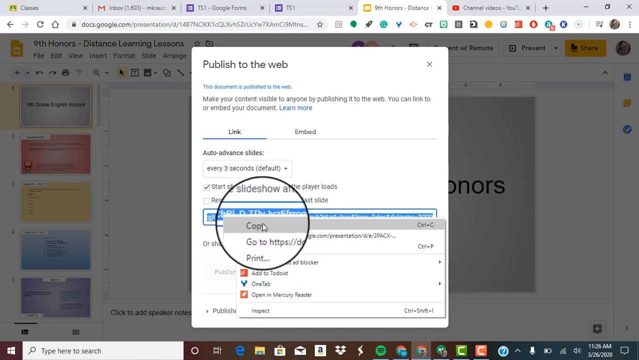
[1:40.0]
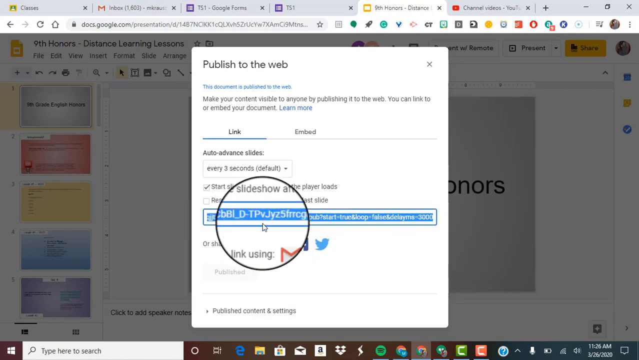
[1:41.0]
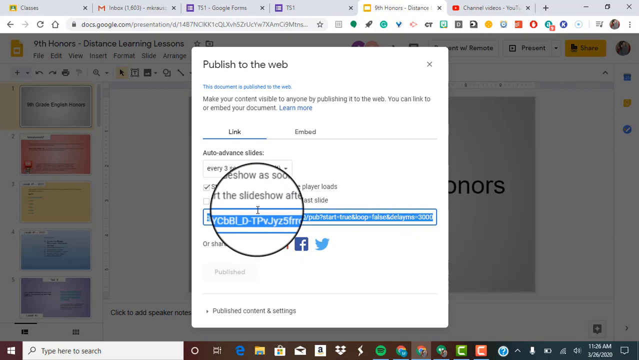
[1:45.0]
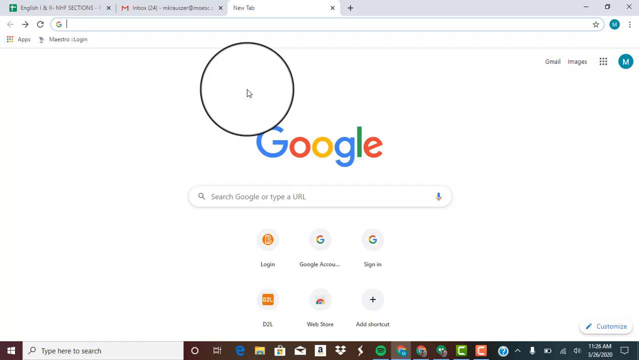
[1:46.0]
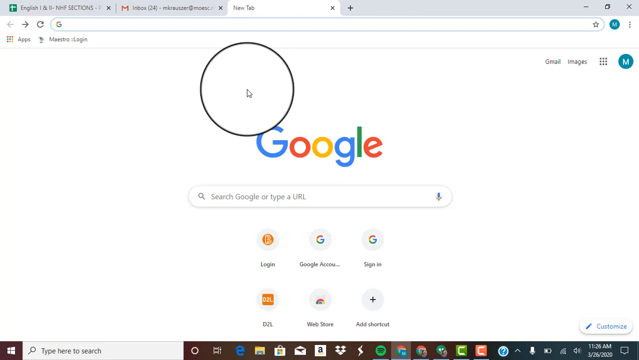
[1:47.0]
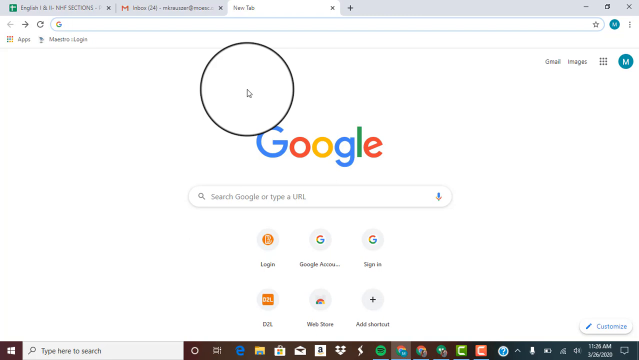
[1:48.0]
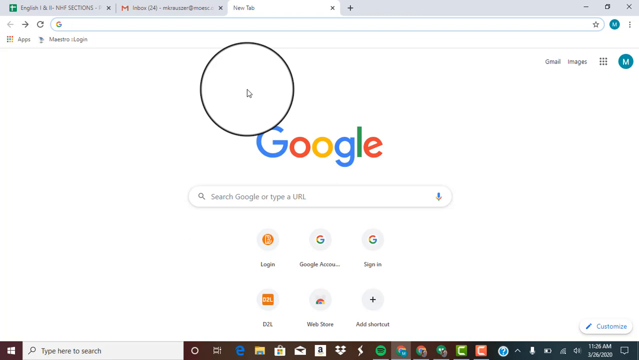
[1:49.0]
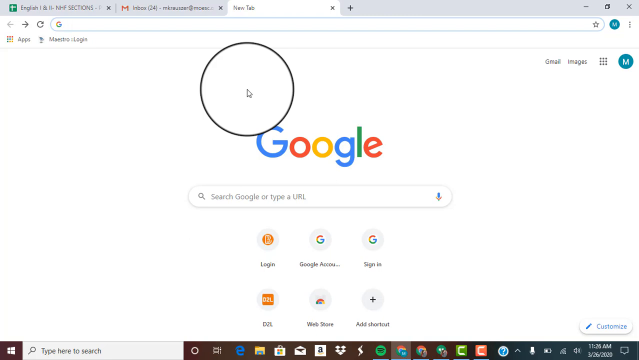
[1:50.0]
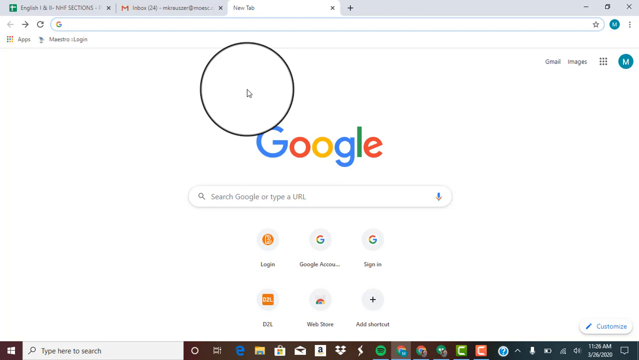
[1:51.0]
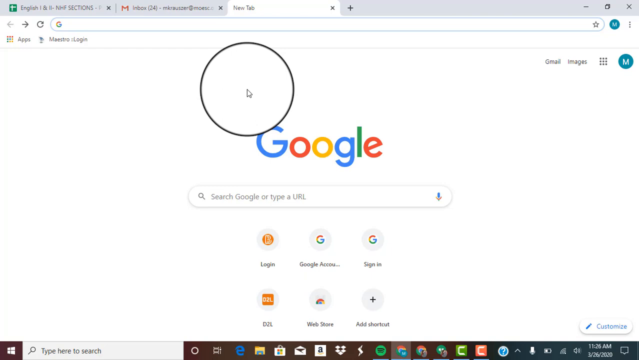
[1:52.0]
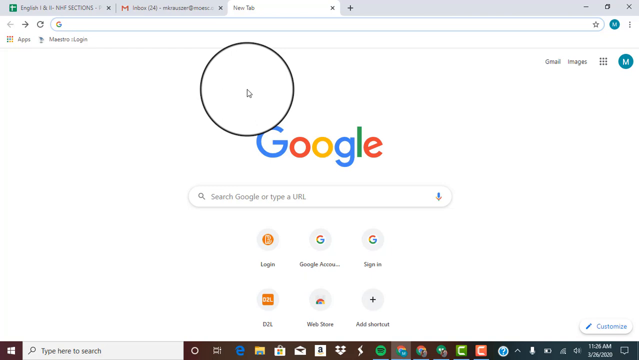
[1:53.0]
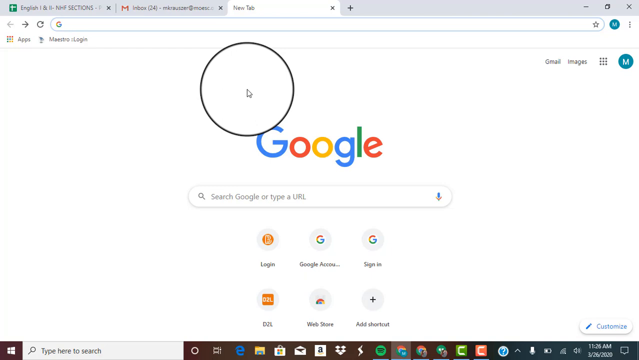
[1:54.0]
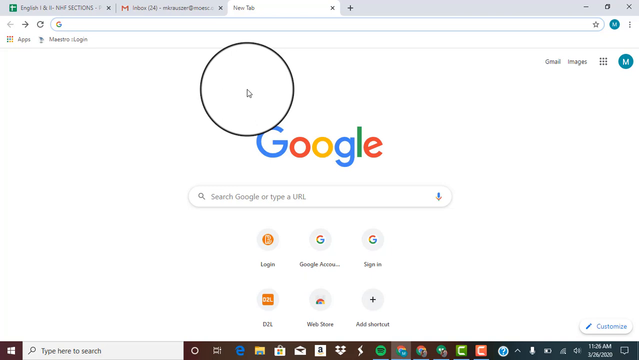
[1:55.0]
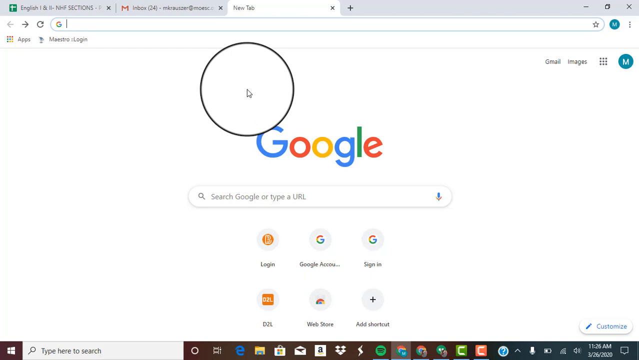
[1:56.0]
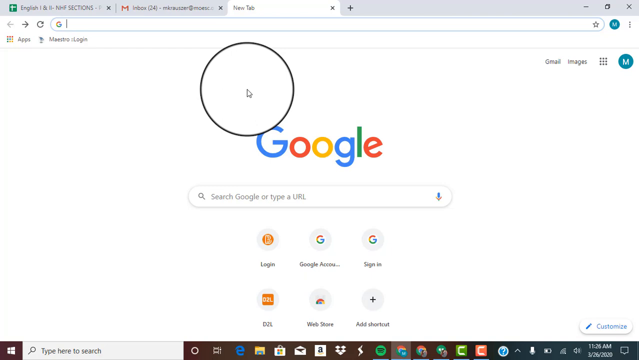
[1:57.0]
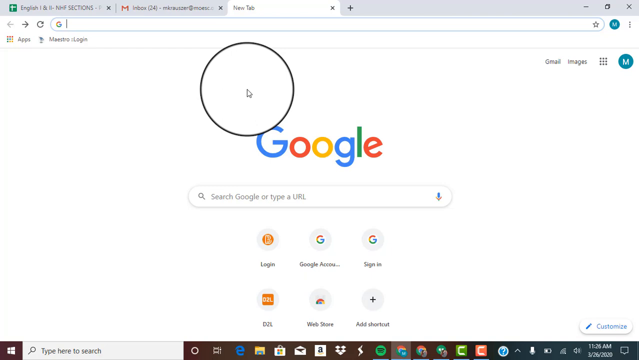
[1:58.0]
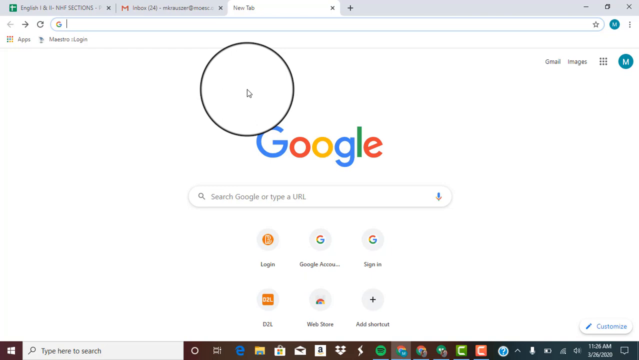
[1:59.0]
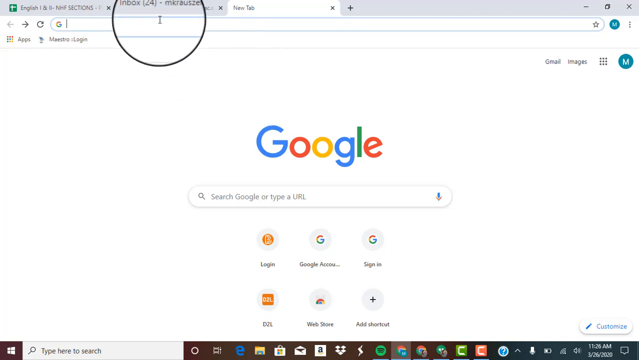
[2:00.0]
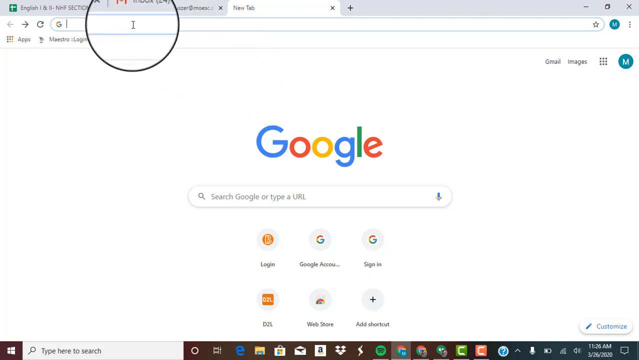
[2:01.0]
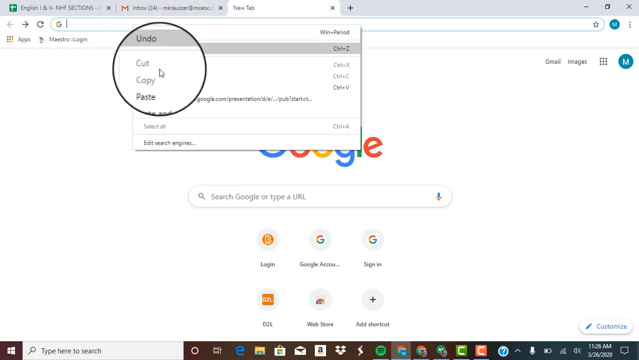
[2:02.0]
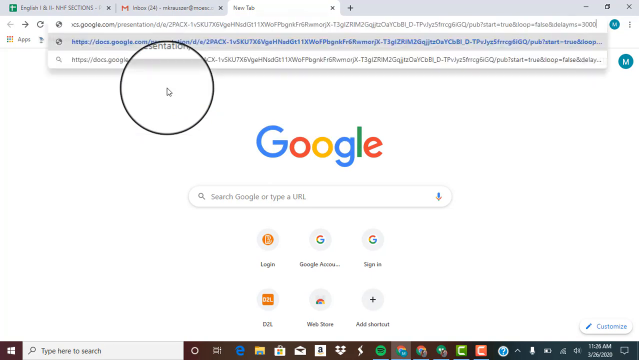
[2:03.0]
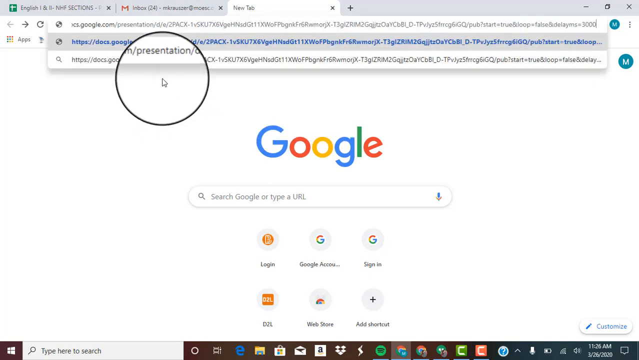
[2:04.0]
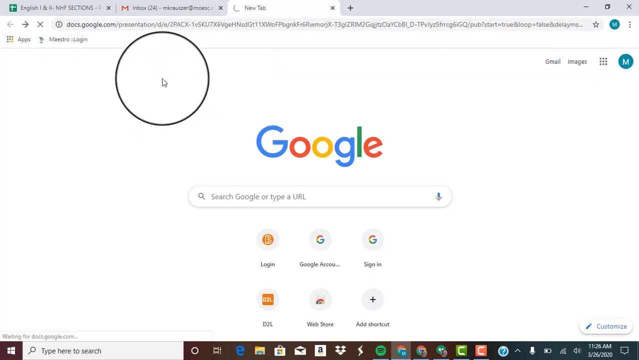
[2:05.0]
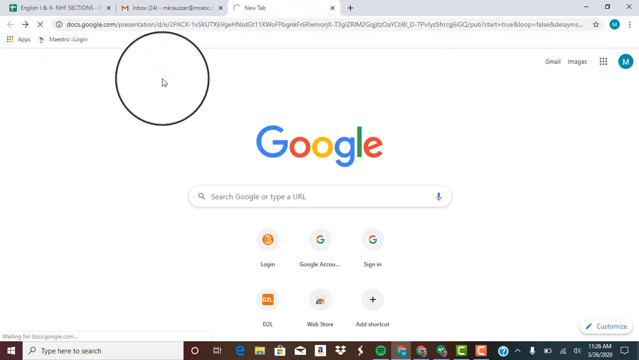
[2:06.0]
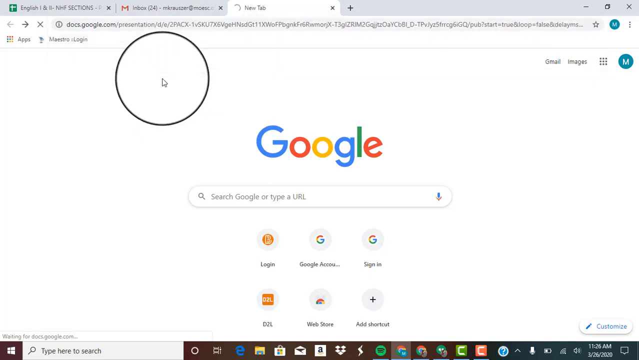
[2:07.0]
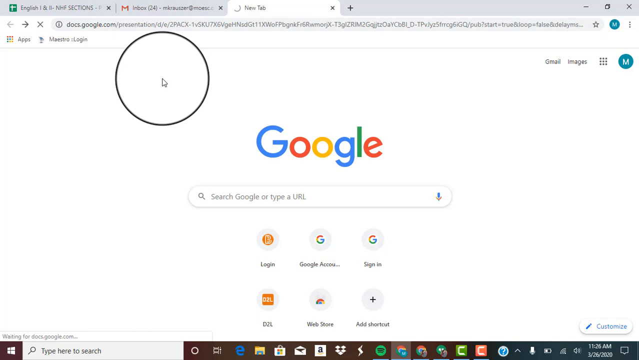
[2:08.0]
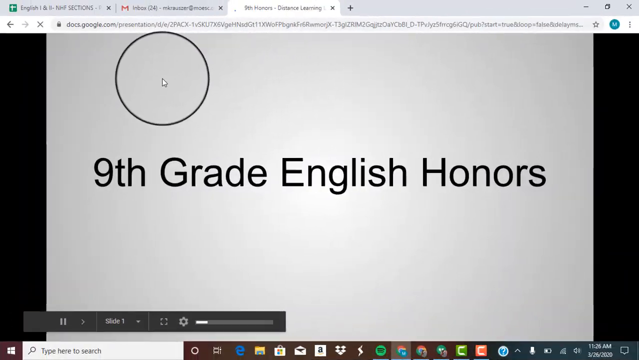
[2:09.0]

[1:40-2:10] A Google slide is shown with a few tabs at the top: one that looks to be maybe YouTube, two Google Forms, Gmail, and one that cannot be identified. In the background along the left-hand side are multiple pages of the slide, one each in gray, red, yellow, blue and purple, and the gray slide is the one open behind a "publish to web" box. A link in the box is highlighted in blue. The mouse is inside a clear circle with a black outline, and apparently a right-click has been made, since the option "copy" is selected. In a transition, little black spots seem to appear all over the page, and then the Google website appears. The tab bar shows what seems to be a Google Sheet and Gmail. The mouse sits in the upper middle portion with nothing else happening. The bottom of the screen suggests the computer might be a Mac. Then the published link appears to be pasted in, and a loading symbol appears on the tab.